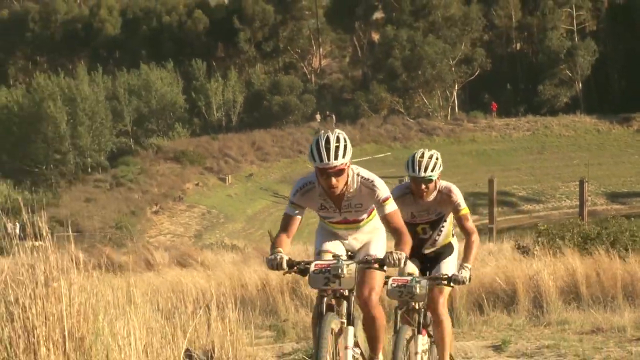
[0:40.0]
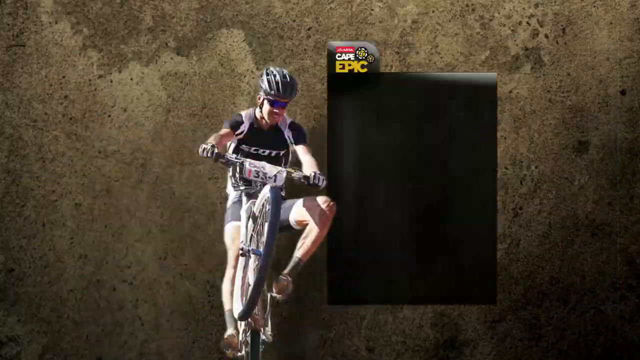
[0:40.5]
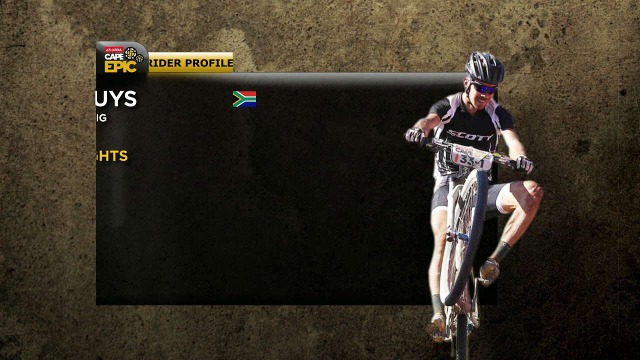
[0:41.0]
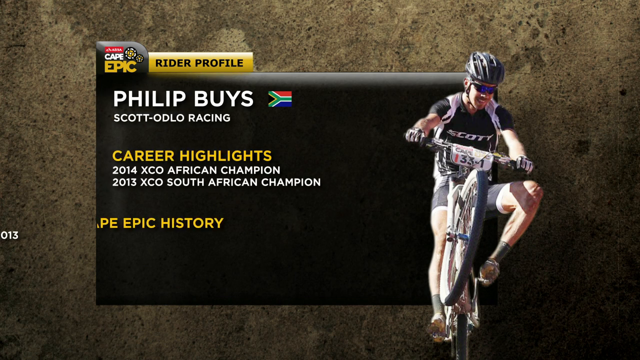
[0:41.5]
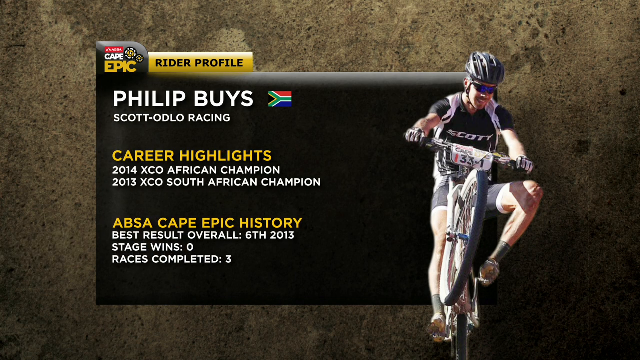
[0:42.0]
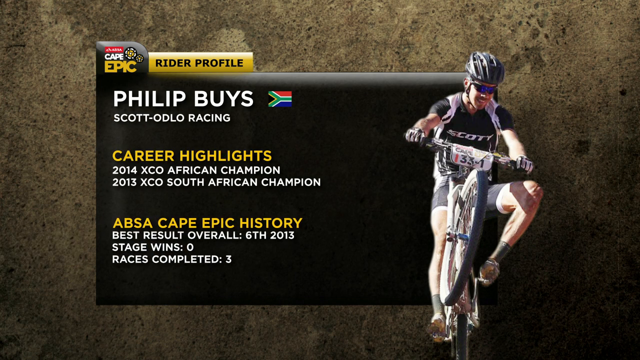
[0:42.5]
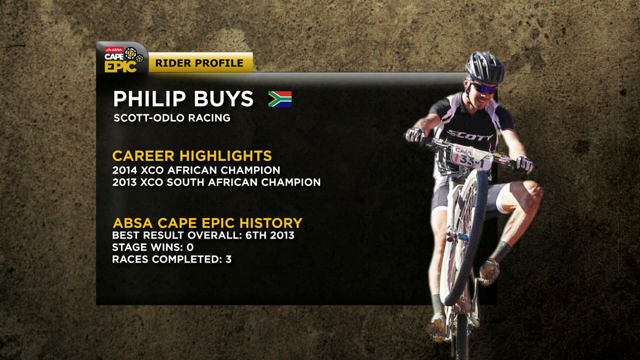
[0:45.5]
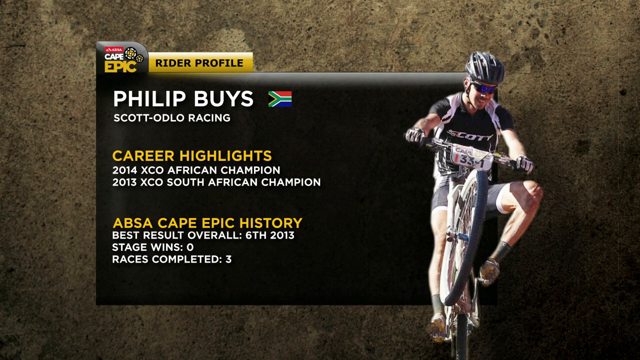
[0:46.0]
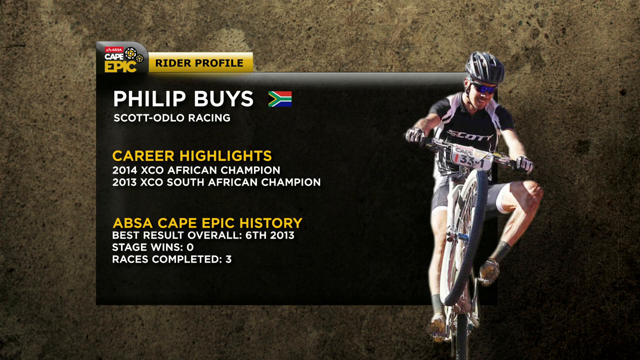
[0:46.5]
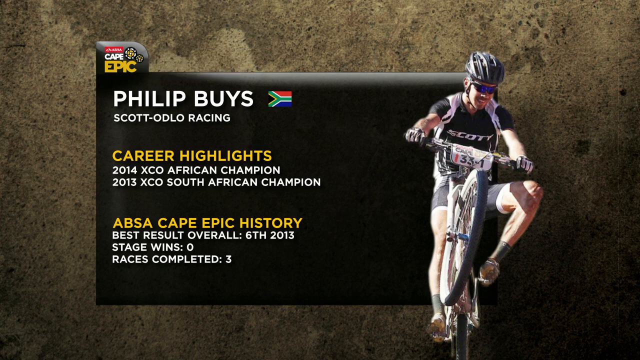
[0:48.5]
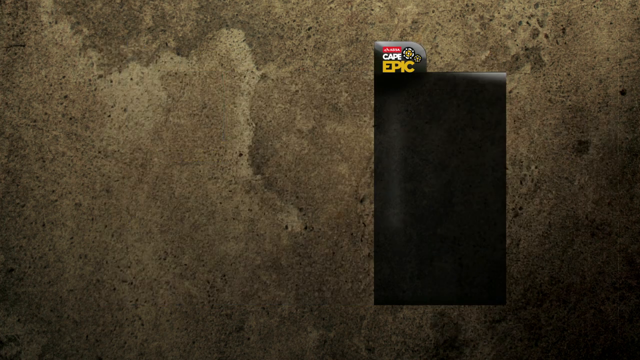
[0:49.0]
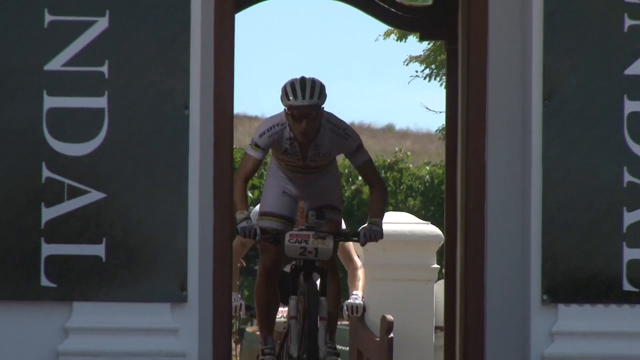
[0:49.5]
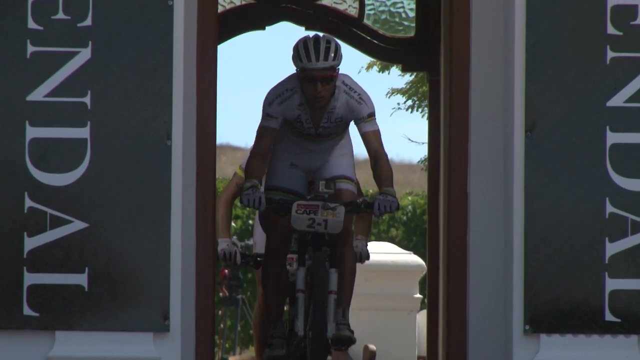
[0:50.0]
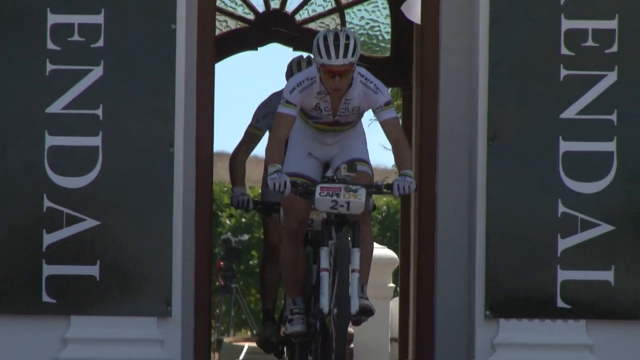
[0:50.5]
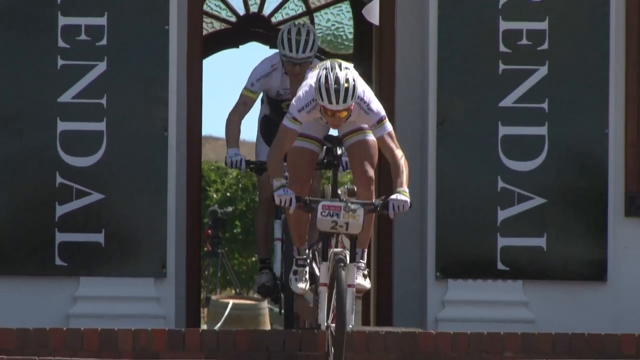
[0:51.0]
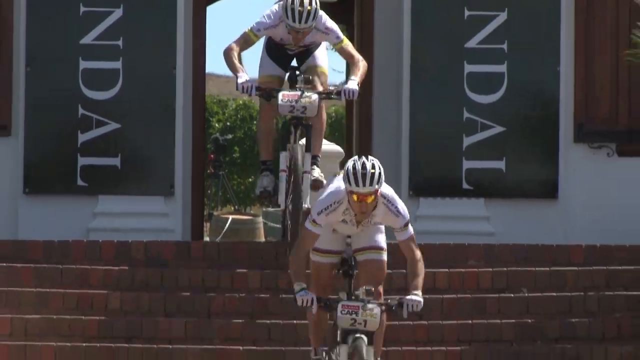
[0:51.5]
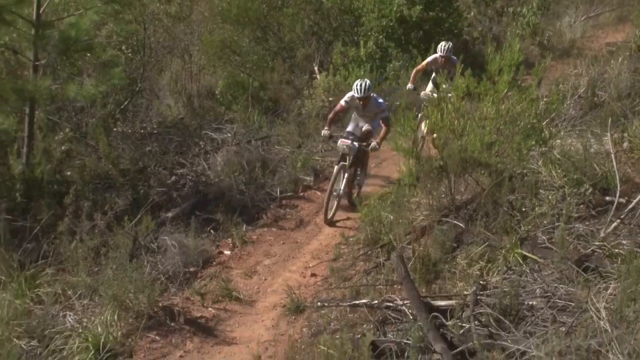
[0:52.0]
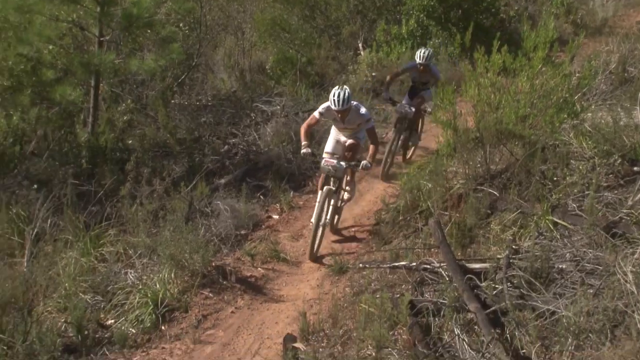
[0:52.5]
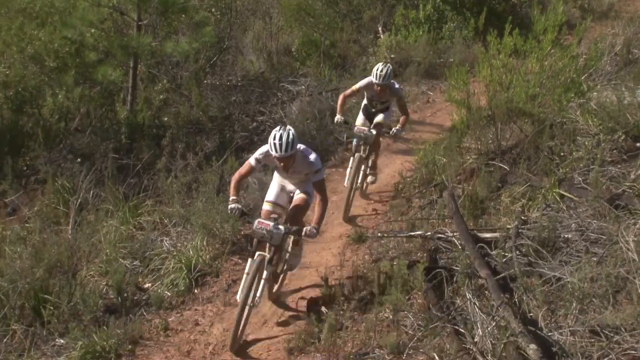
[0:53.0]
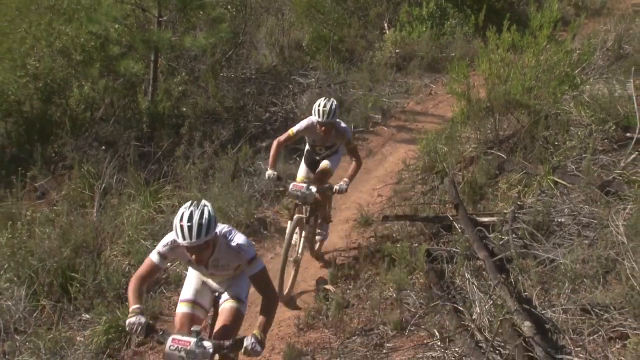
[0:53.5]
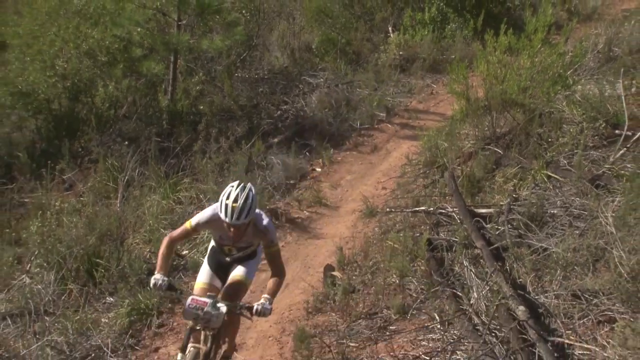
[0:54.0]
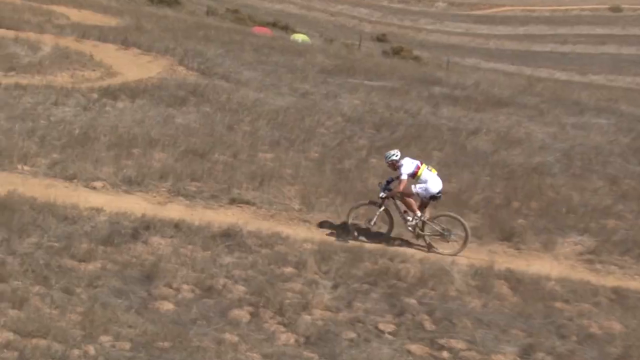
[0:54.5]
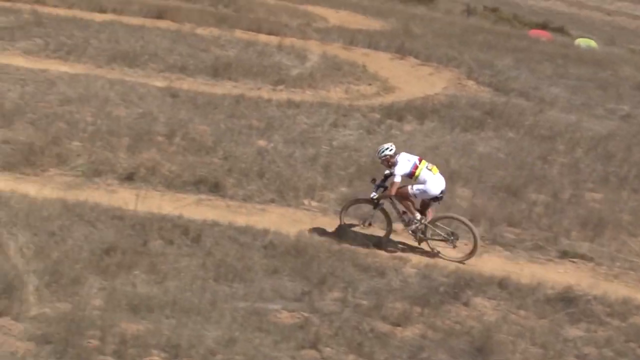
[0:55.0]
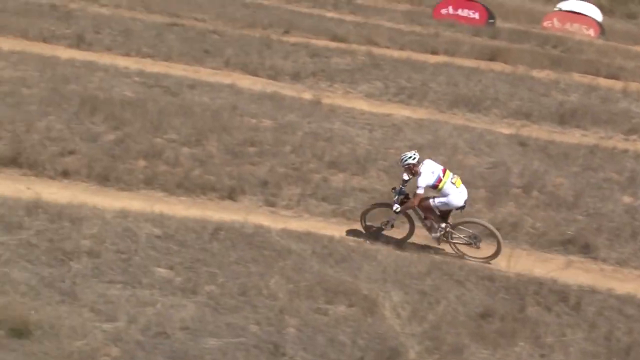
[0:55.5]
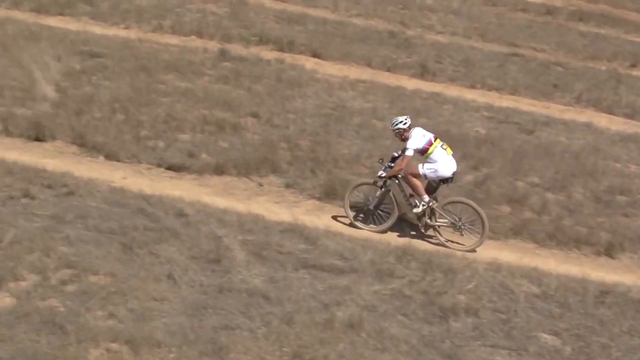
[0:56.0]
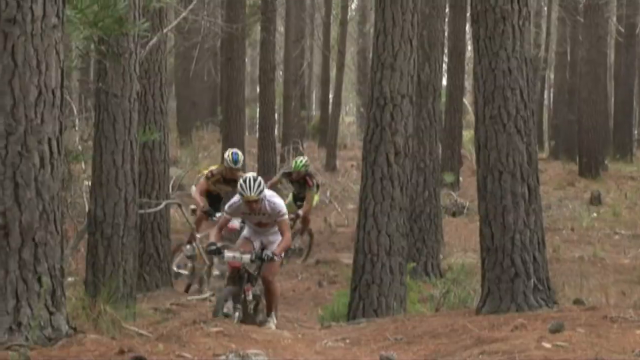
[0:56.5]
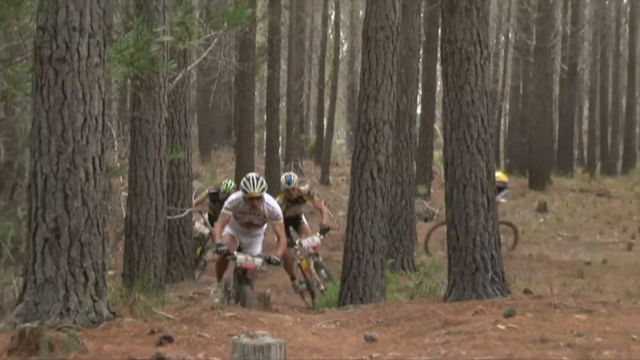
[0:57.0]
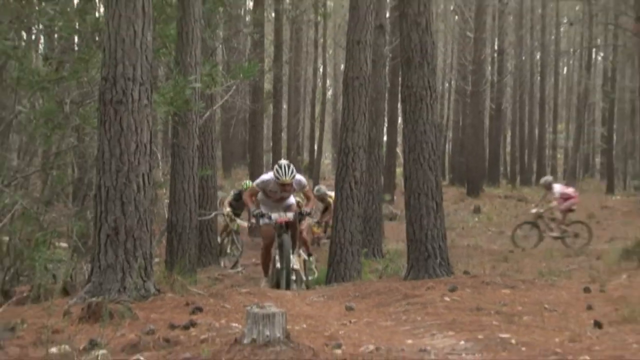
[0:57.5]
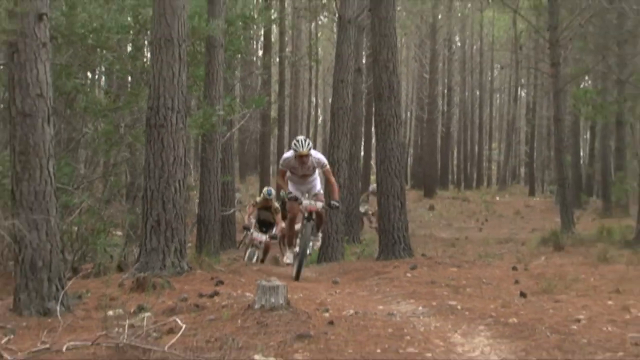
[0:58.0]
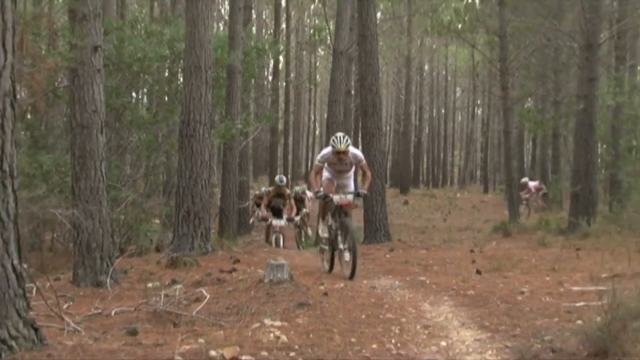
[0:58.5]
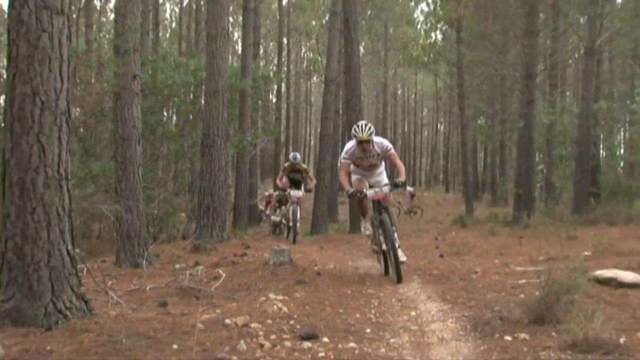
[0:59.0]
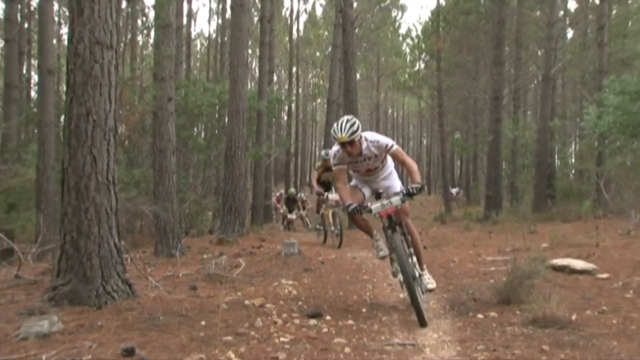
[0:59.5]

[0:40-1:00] Two cyclists, both wearing white helmets, ride up a hill in the foreground close to the camera. Dry-looking grass lines the side of the trail behind them, and beyond it on the right side of the screen are some wooden-looking poles. Far down at the bottom of the hill is a grassy-looking area that still looks arid, with thin, sparse grass, and beyond that more dry, dead-looking brush. In the farthest background at the top of the screen is a bunch of trees, some large and some small, all with green leaves. The video then changes to a graphic with text on the left and a photo of a rider on the right. The rider wears a black top with white text on the chest reading "Scotty" or "Scott", shades or goggles that look like they block the sun, a black helmet and gloves. At the top left of the graphic, the first text reads "Cape Epic rider profile" along with the name spelled "PHILIP BUYS".